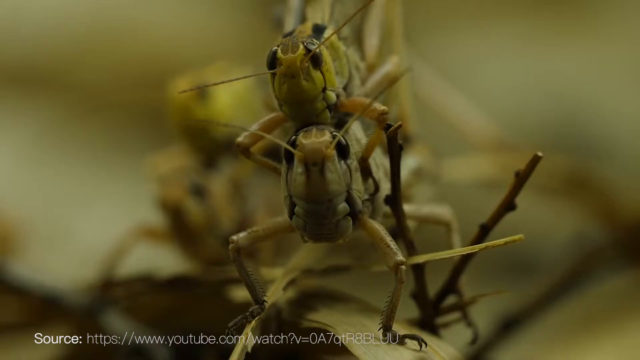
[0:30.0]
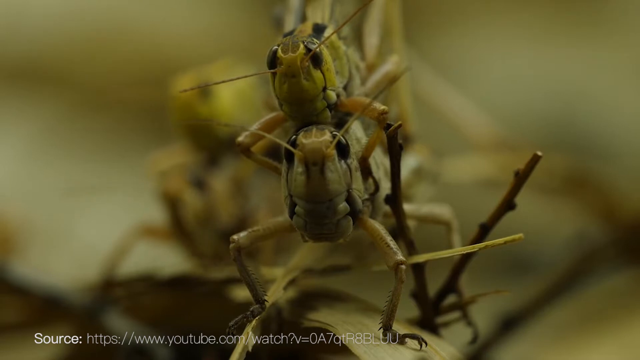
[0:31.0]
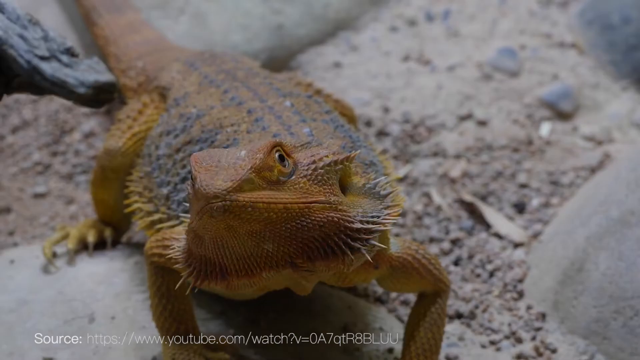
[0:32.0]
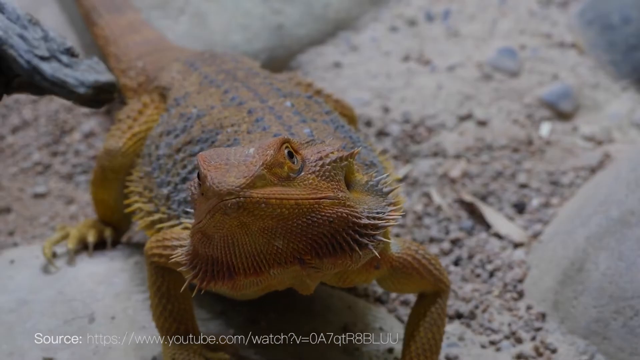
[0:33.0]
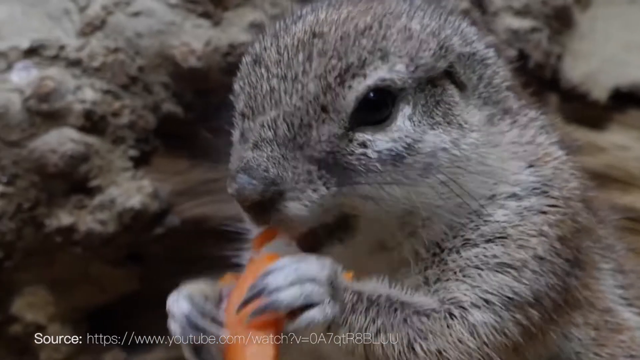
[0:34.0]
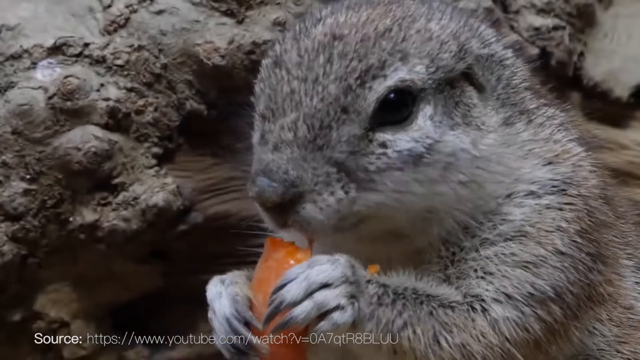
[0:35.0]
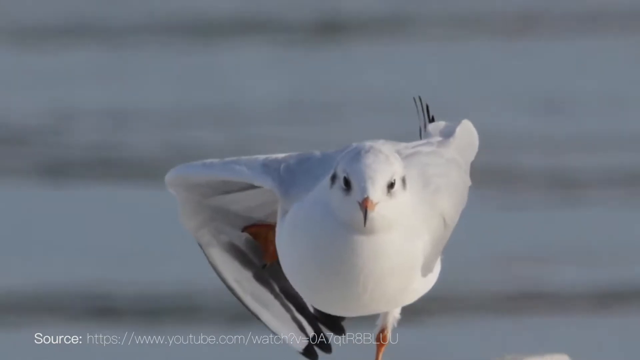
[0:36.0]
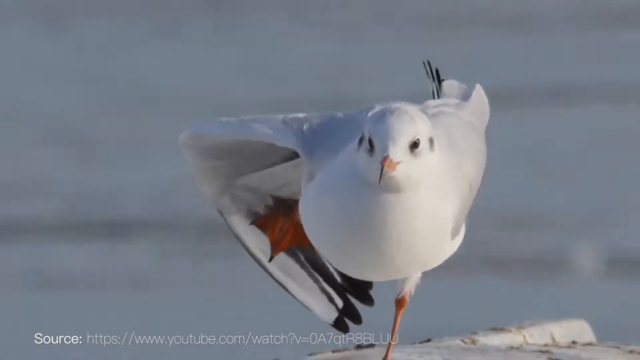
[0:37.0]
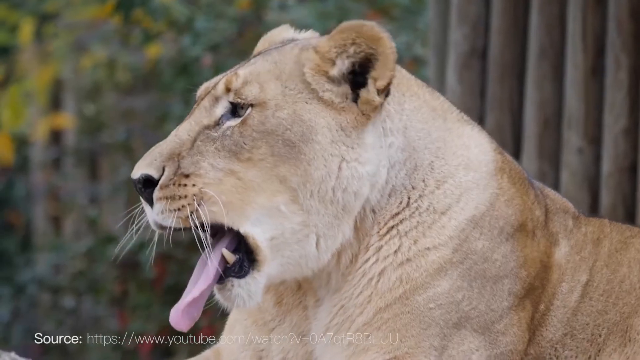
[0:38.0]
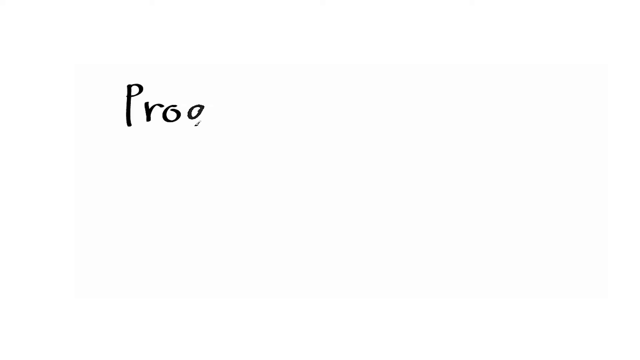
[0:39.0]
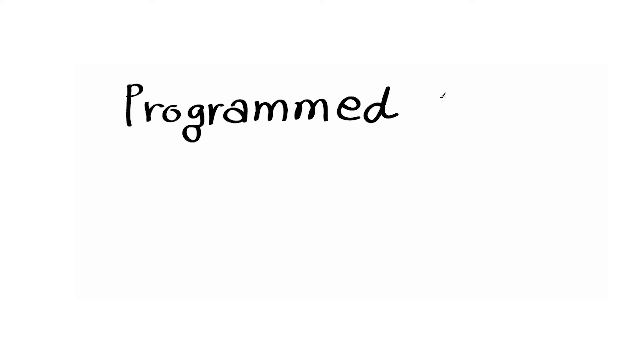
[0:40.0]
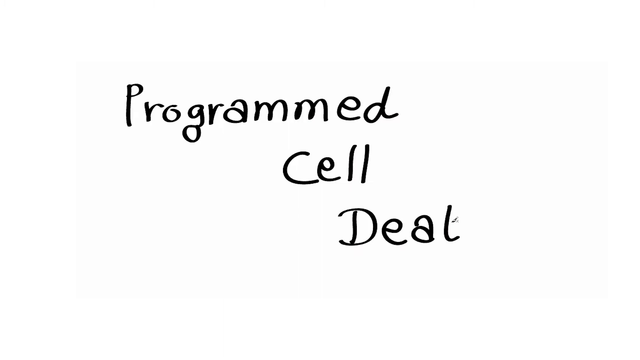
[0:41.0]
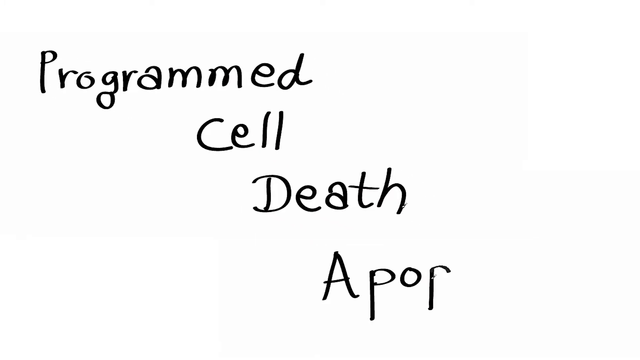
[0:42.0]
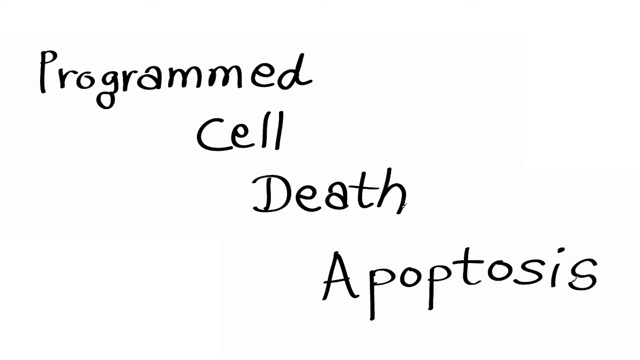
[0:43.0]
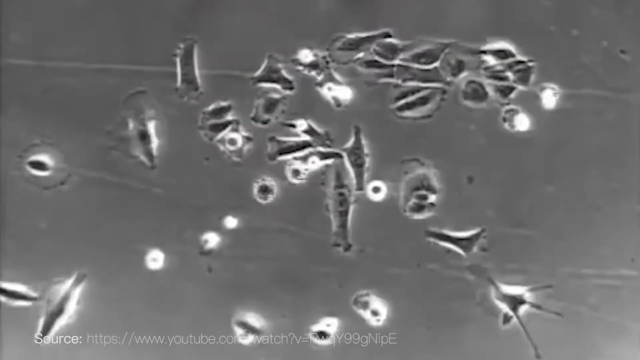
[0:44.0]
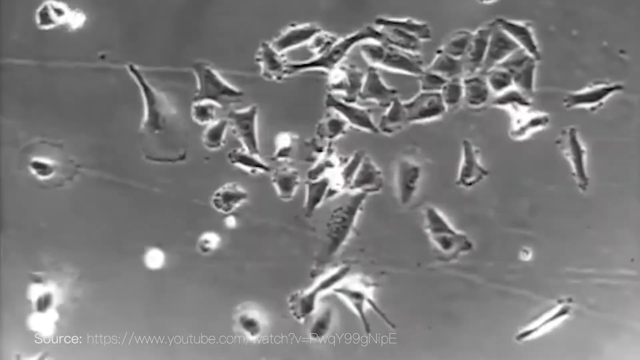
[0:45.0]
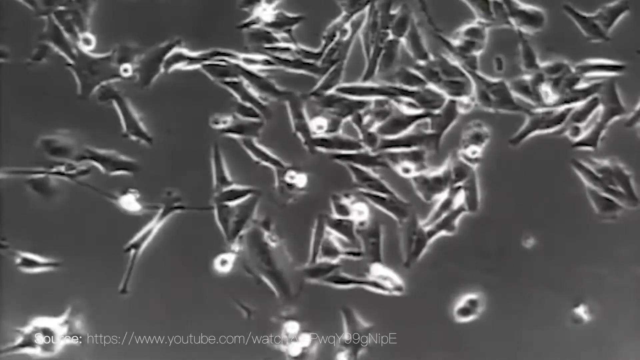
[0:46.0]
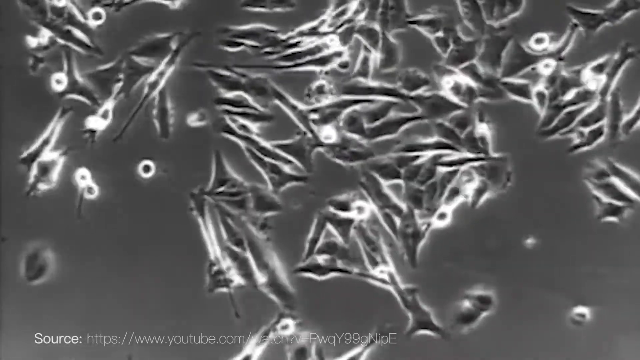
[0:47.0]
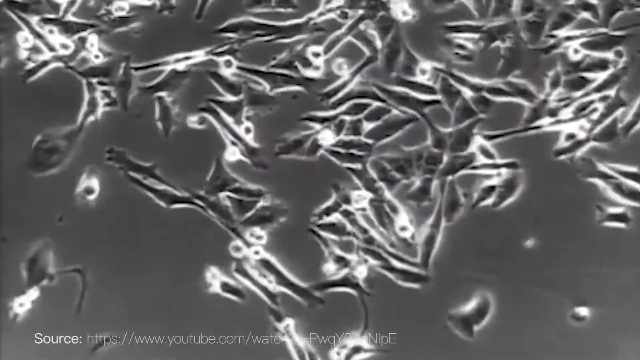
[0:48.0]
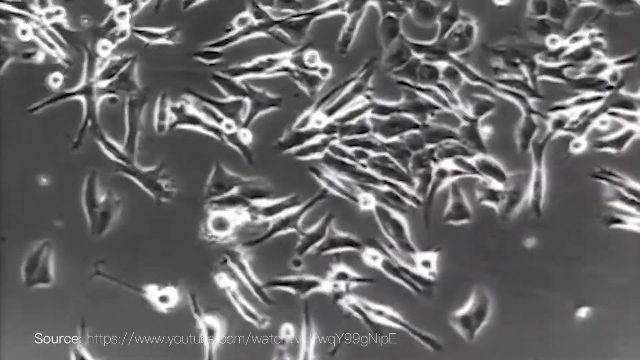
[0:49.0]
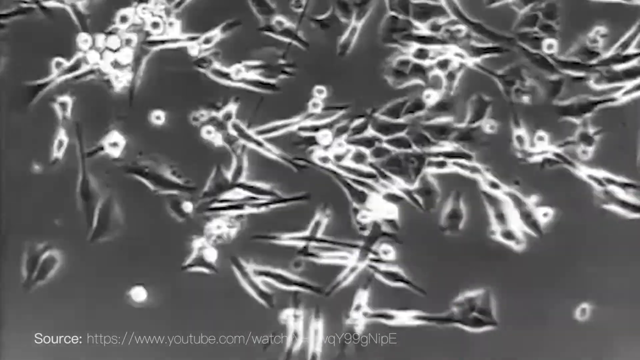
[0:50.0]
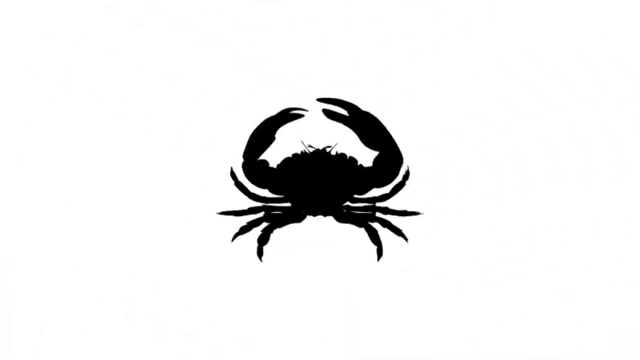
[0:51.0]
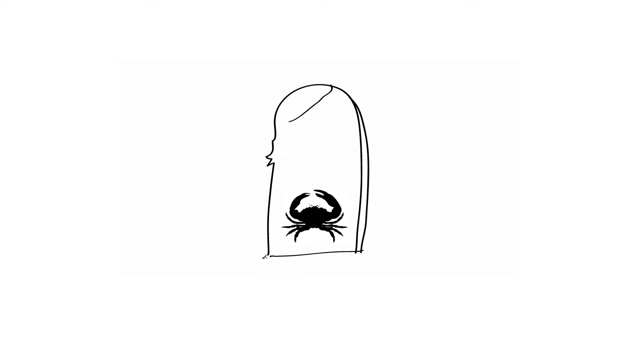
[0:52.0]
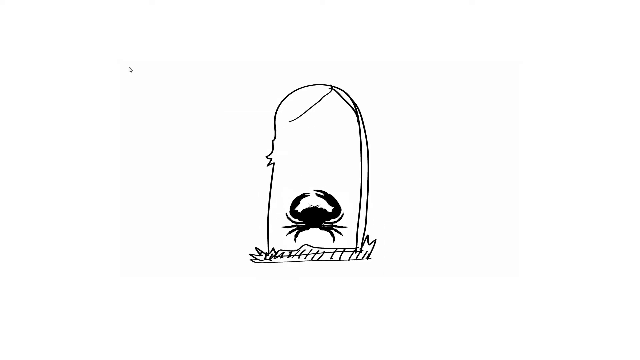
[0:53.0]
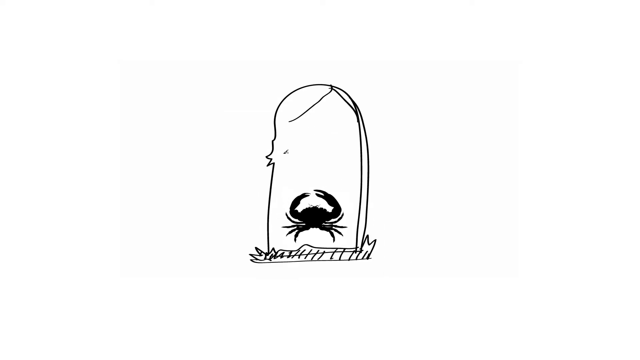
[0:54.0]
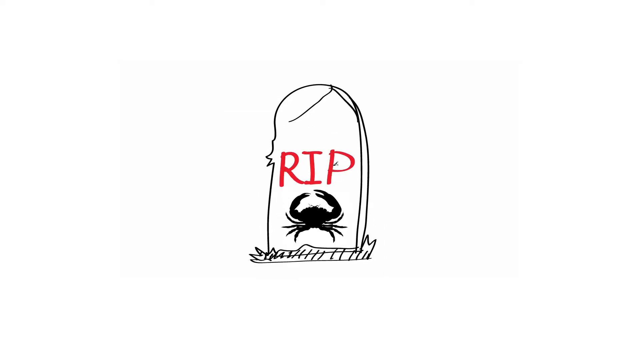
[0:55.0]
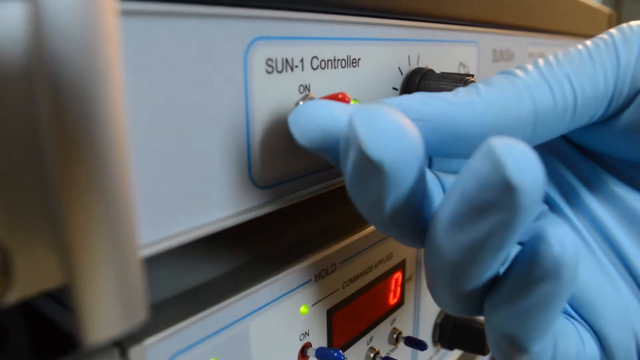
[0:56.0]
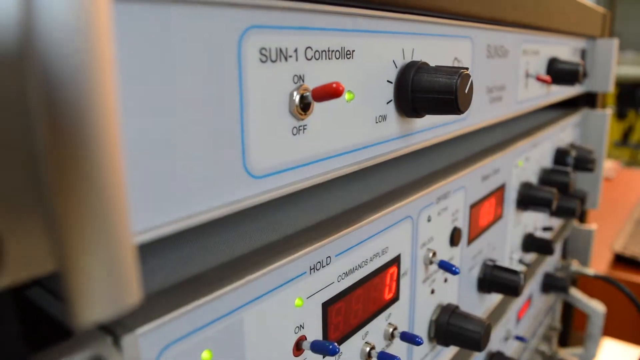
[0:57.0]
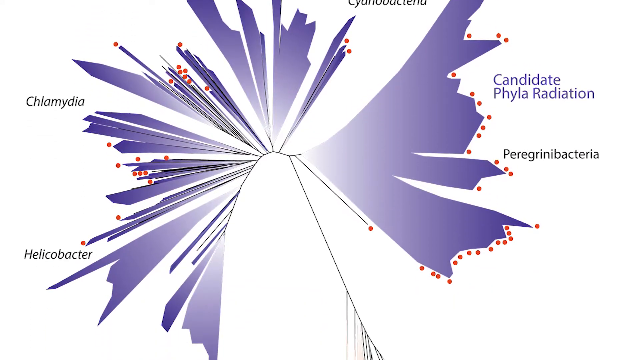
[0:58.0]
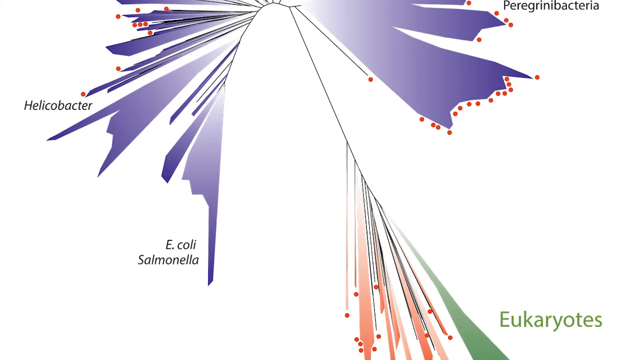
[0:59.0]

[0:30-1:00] A close-up shows two grasshoppers that appear to be mating, one on top of the other. Next is a brown lizard, possibly a gecko, with spikes coming off its neck. A close-up follows of a gray squirrel eating a nut. Then a bird, apparently a seagull, stands on one leg with a body of water behind it. A lioness yawns with her large tongue out. Finally, the text "programmed cell death. apoptosis." appears.